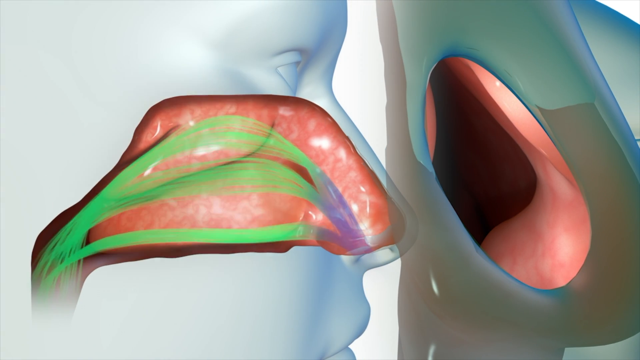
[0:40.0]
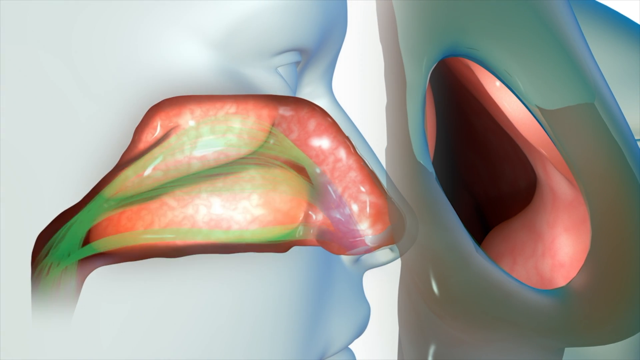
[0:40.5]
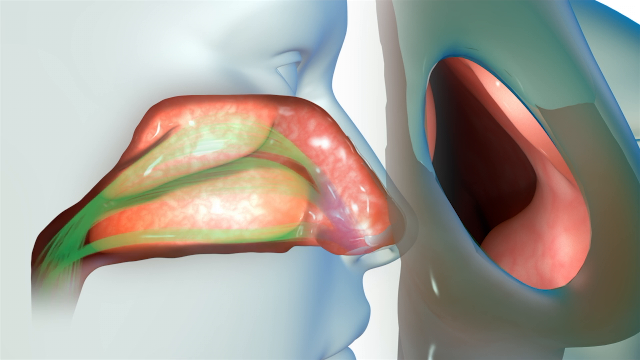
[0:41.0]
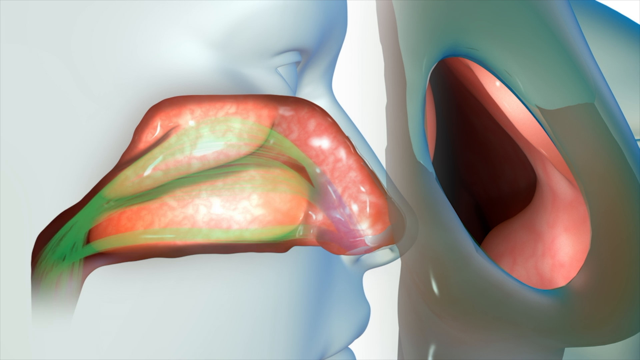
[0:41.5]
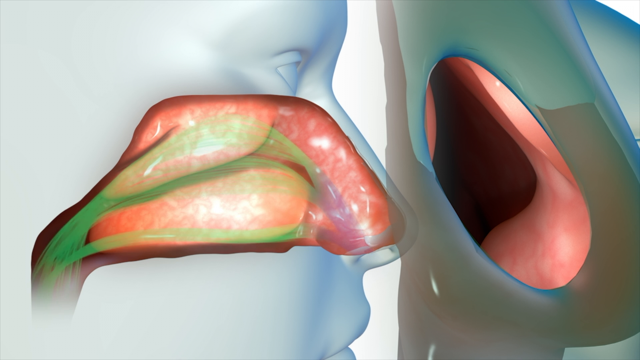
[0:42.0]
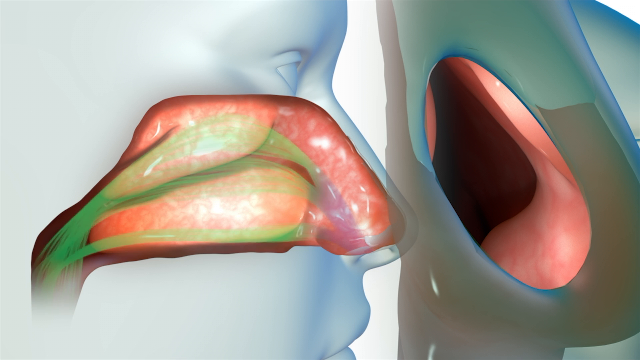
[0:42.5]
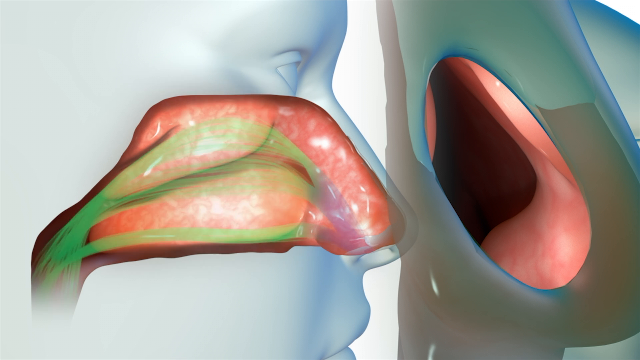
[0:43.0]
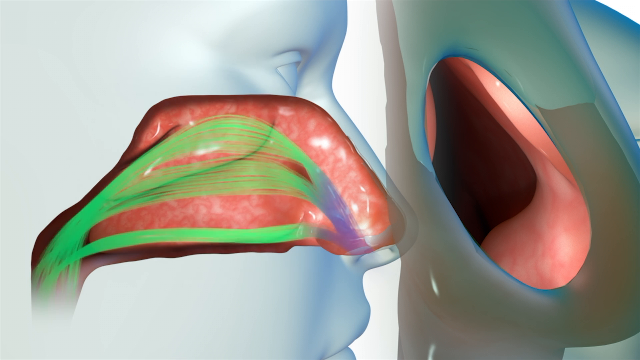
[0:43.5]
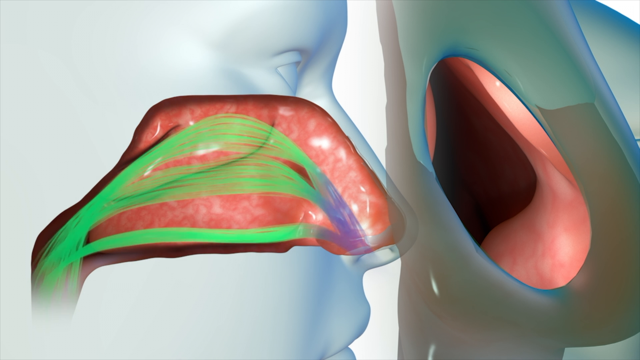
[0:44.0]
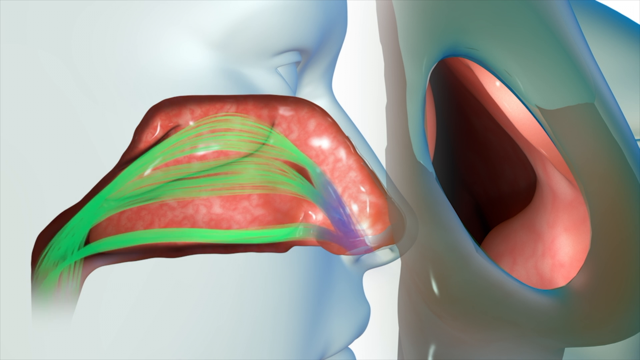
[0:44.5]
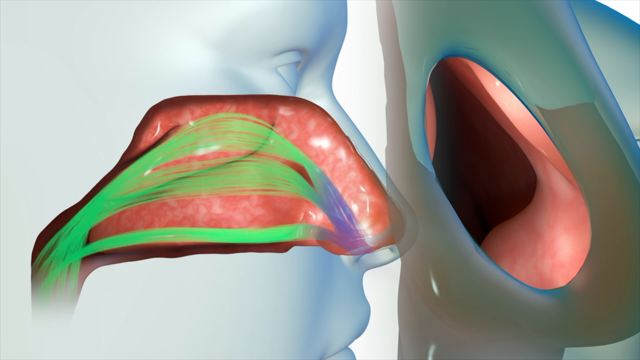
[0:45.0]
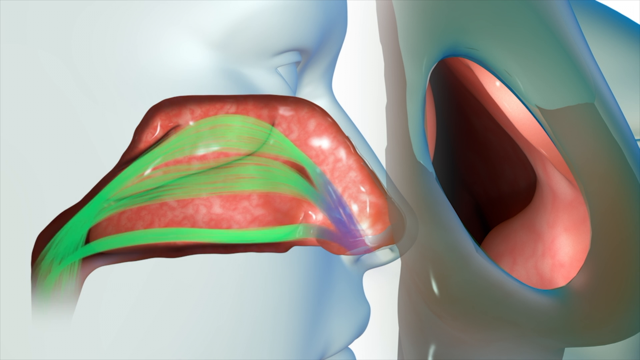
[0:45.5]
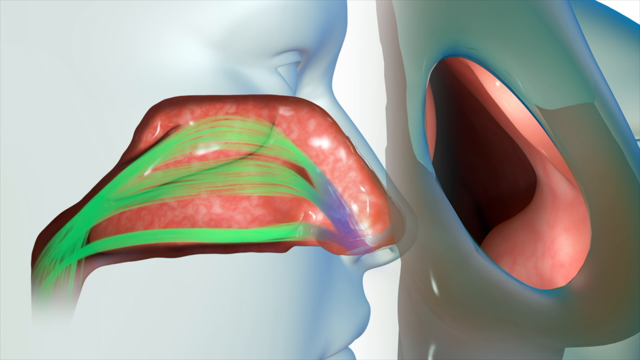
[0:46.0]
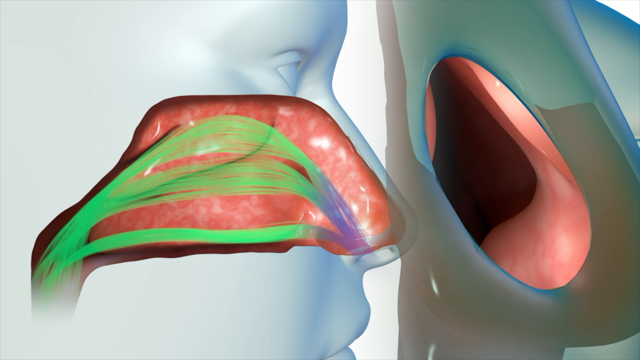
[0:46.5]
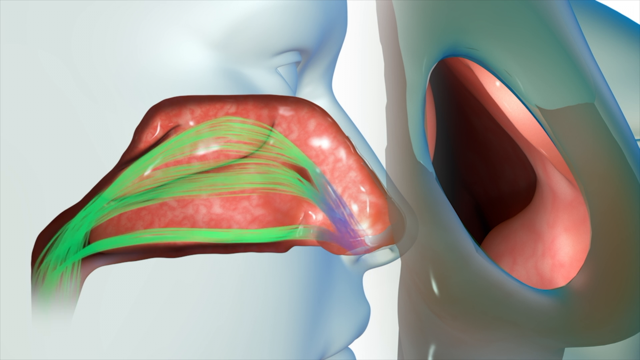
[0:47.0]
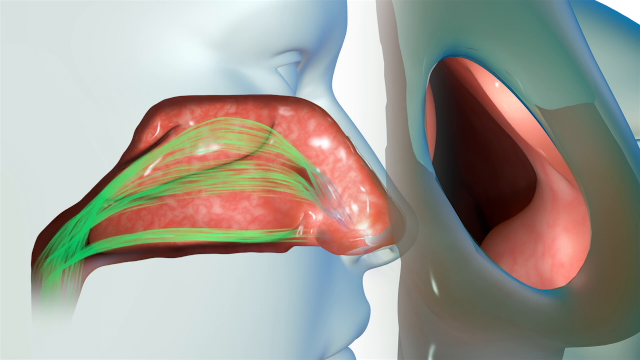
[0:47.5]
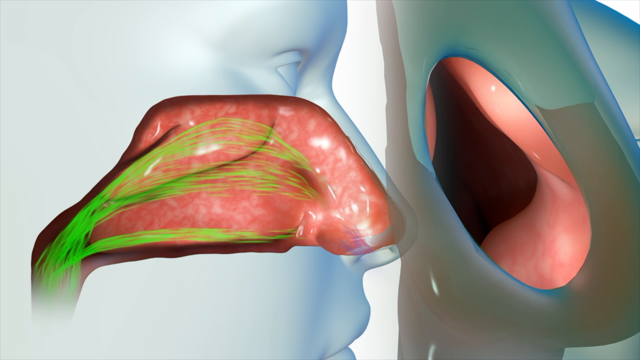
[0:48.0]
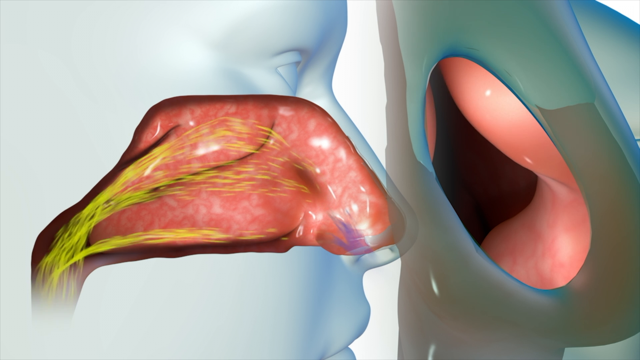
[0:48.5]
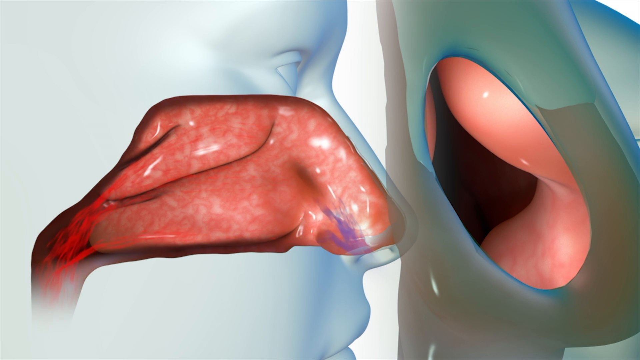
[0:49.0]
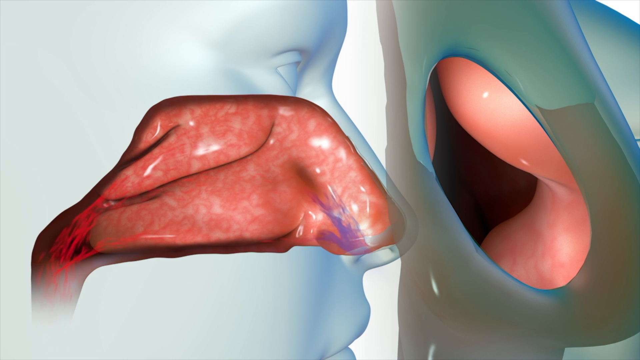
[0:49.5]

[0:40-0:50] The lines continue to be shown, with the view of the nostril on the bottom. The face on the left side gradually fades out for a moment, then fades back in, and the lines become more solid, continuing to animate toward the back of the nasal passages. The lines near the nostril are blue and become more solidly green as they go in toward the left side. The lines fade out and gradually turn red: the ones on the right side are still blue, while the ones on the left side are red. The image on the right side shows the nasal tissue becoming more inflamed.